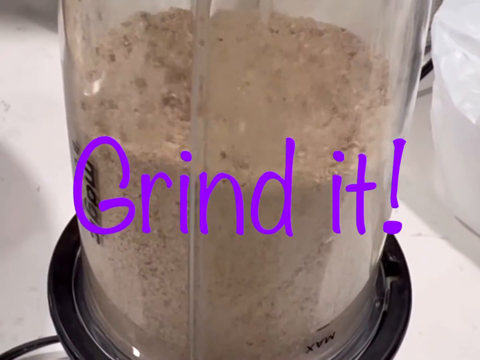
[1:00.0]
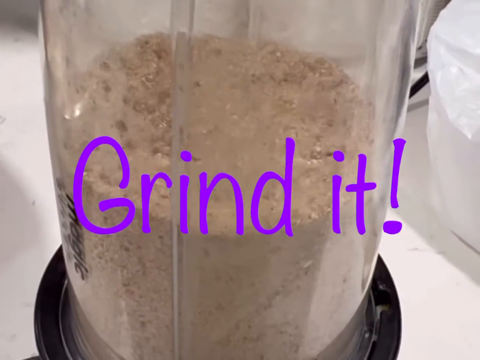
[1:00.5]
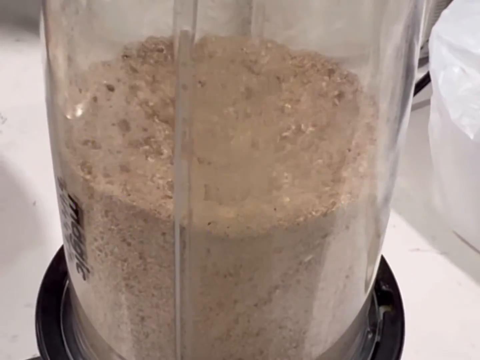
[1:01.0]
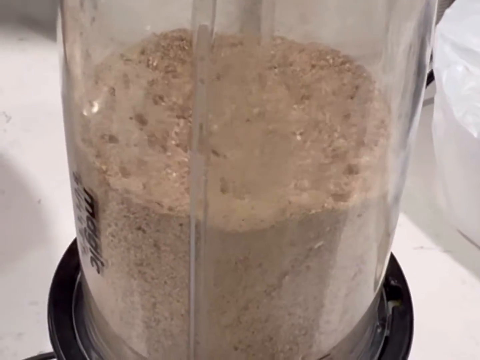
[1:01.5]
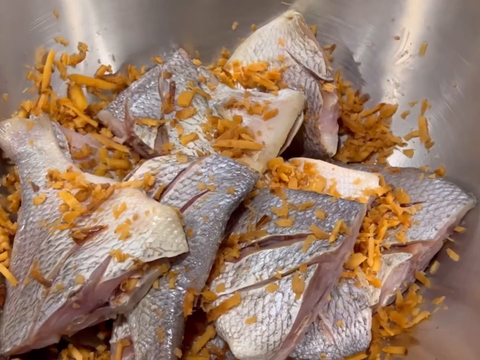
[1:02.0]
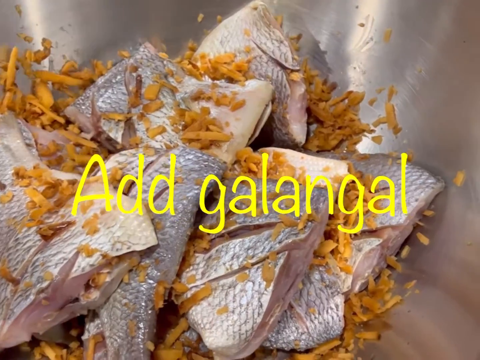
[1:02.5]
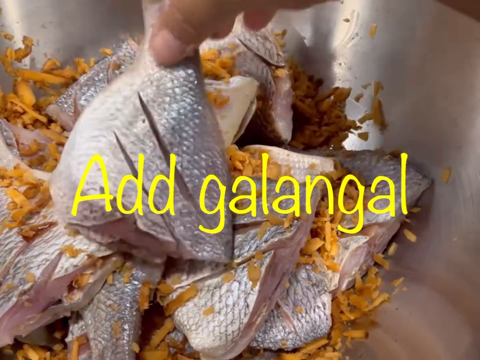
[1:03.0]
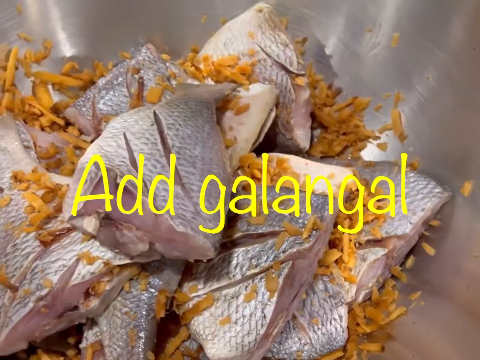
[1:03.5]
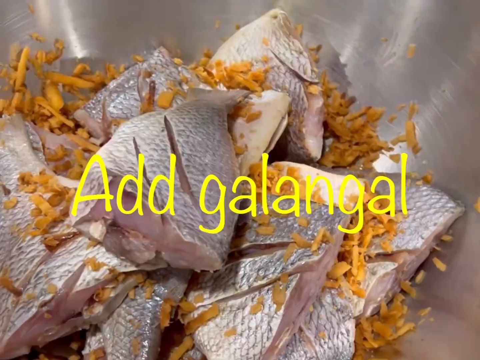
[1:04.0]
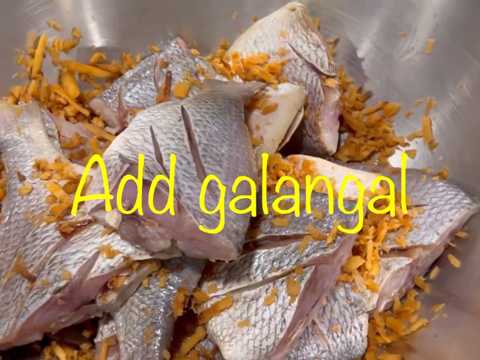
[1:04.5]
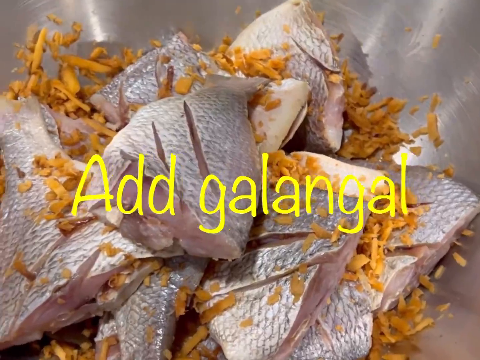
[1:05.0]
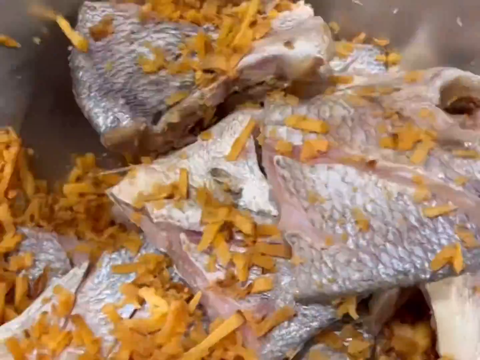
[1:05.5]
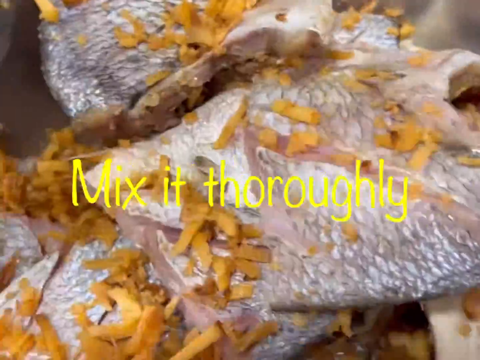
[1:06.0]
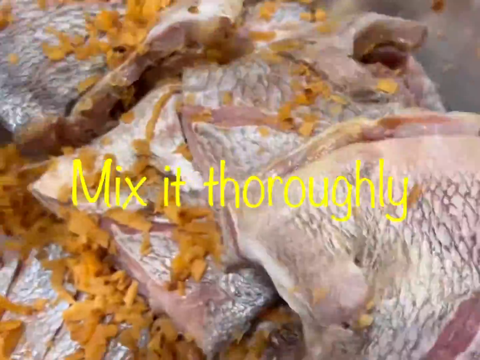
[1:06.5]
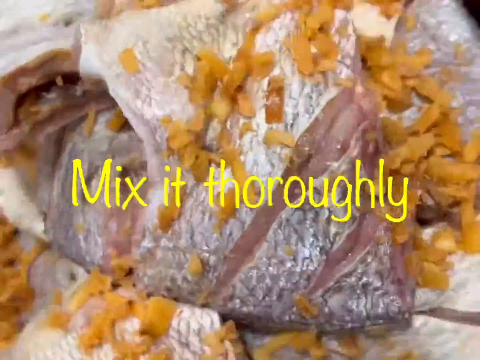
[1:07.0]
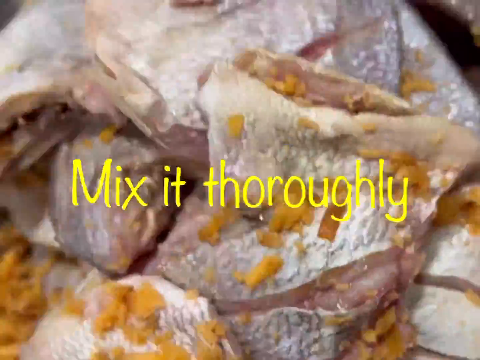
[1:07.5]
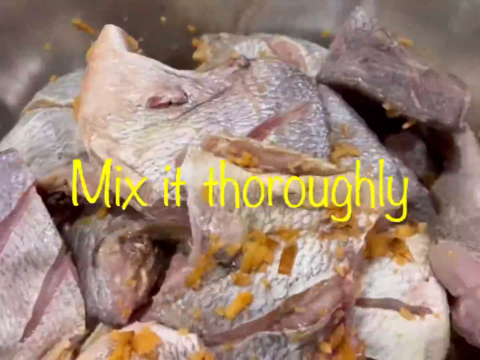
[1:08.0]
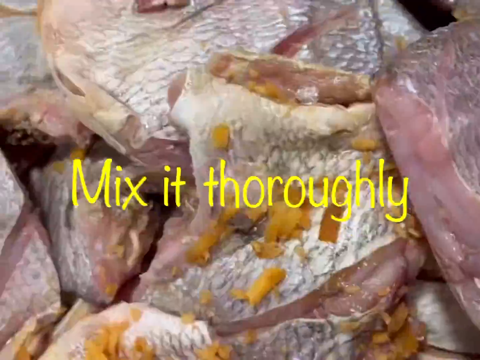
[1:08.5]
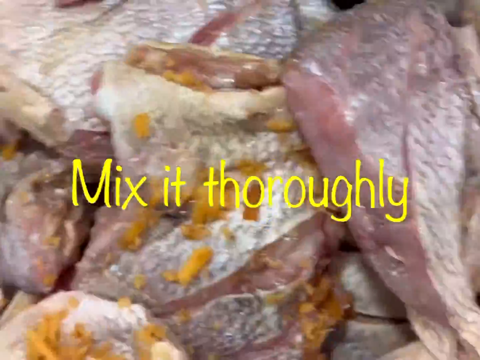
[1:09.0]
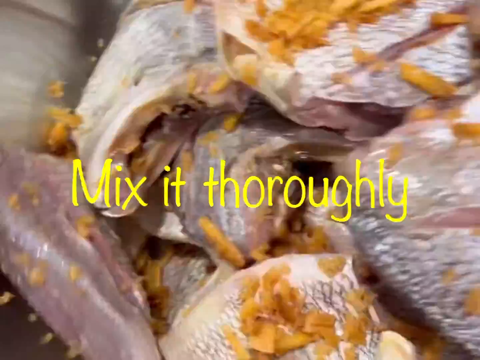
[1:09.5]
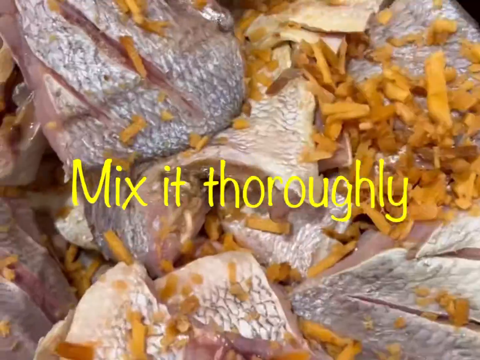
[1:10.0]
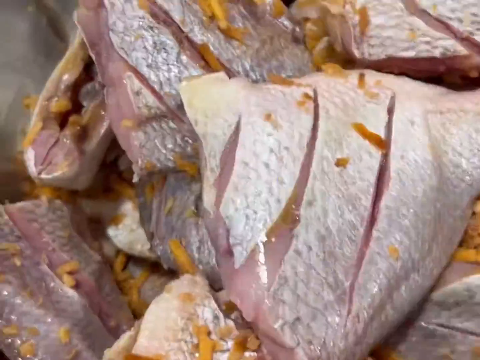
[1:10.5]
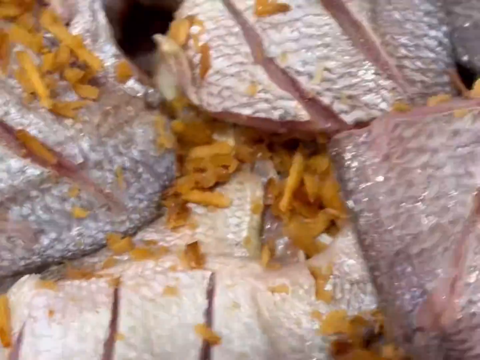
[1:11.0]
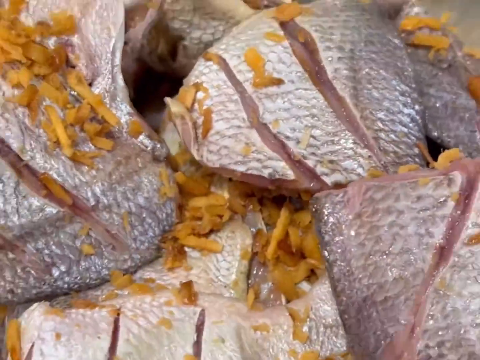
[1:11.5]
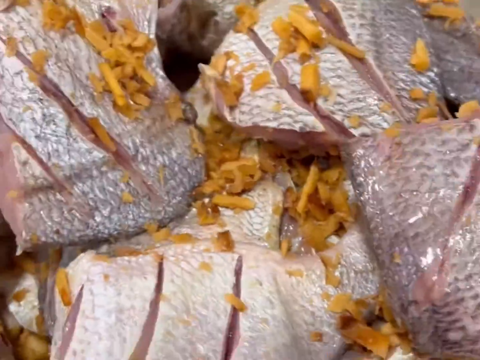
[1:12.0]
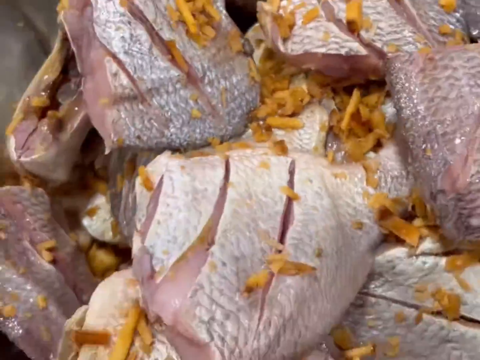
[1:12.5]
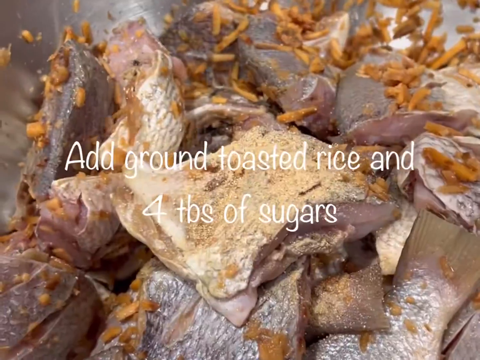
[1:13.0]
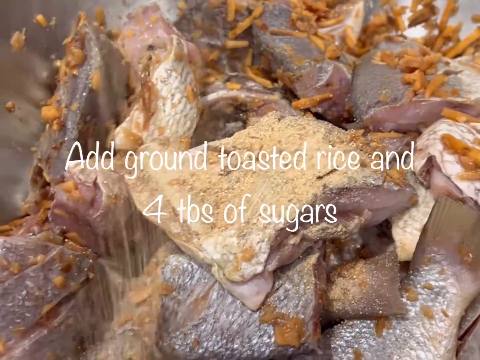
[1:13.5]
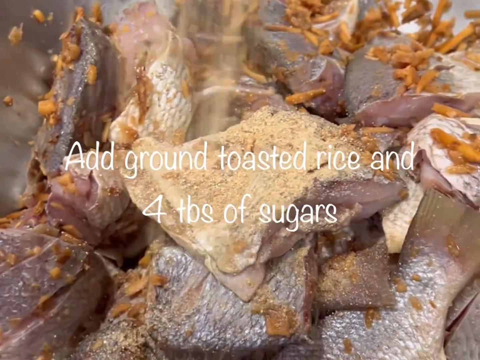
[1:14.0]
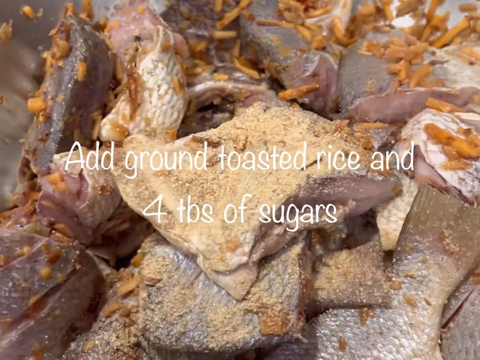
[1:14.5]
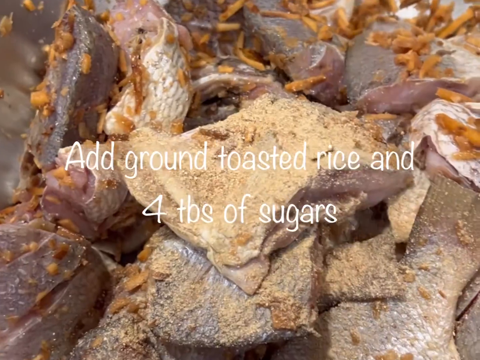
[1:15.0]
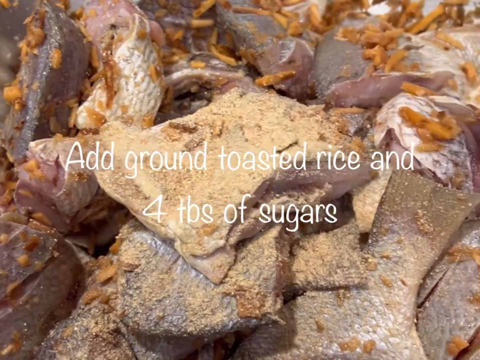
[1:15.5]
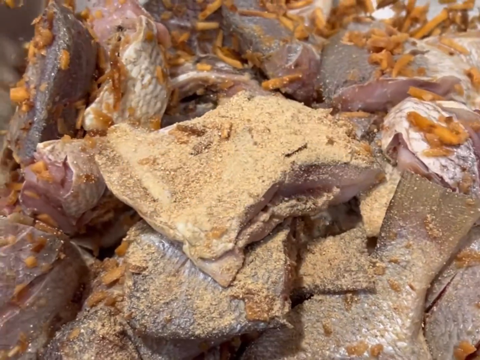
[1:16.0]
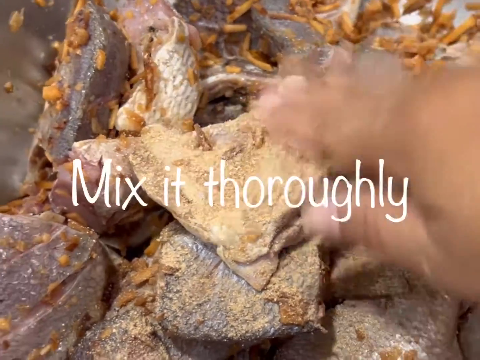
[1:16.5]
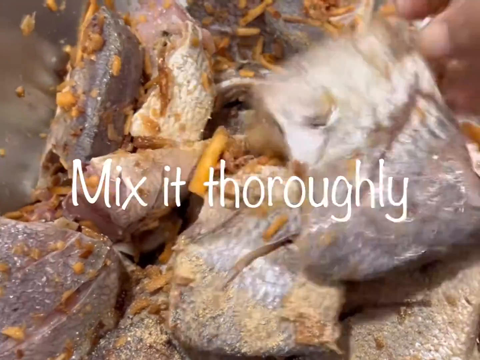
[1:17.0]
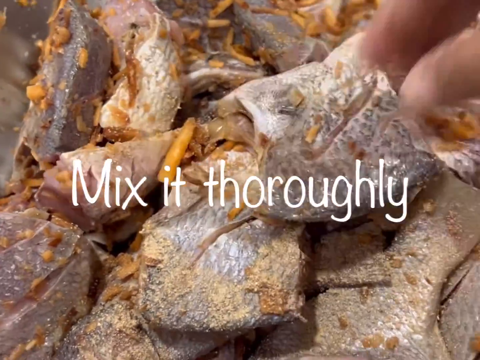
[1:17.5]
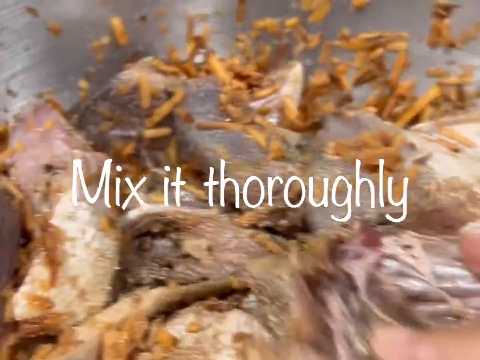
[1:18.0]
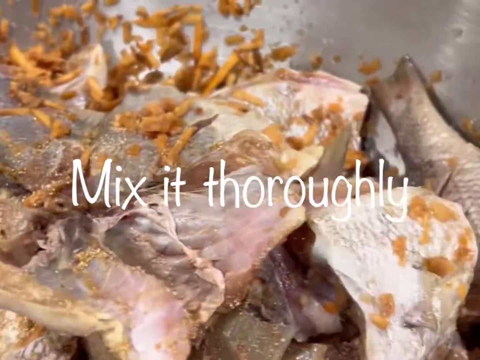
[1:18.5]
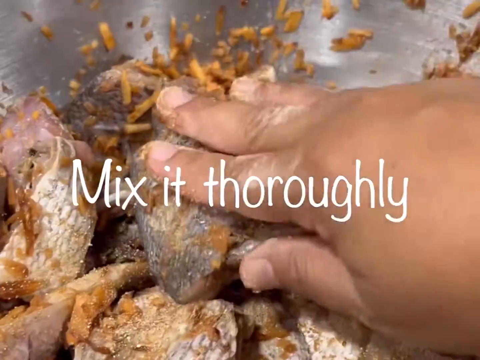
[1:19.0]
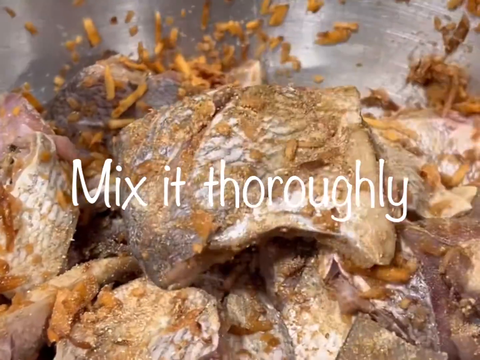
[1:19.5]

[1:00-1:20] The footage now seems to play in real time rather than sped up. The galangal is mixed thoroughly with the fish for quite a few seconds, and then the ground rice and a few tablespoons of sugar are added to the fish and galangal mixture. Text overlay explains what is happening. The galangal looks like a different colour than before, as if something has happened to it in between. By the end there is a mixture of fish, galangal, ground rice and sugar.